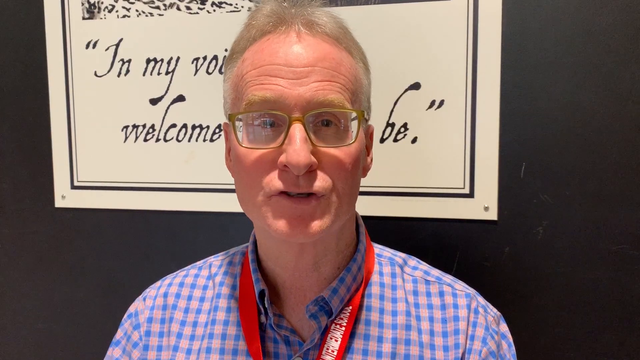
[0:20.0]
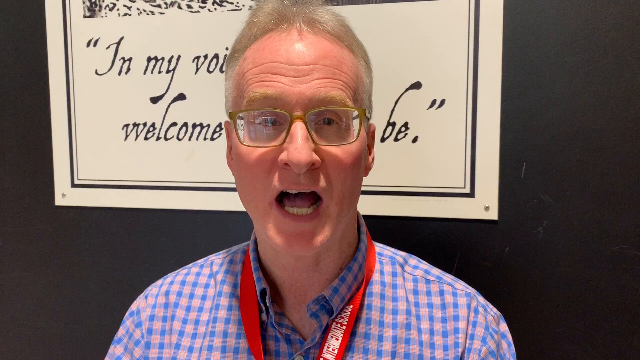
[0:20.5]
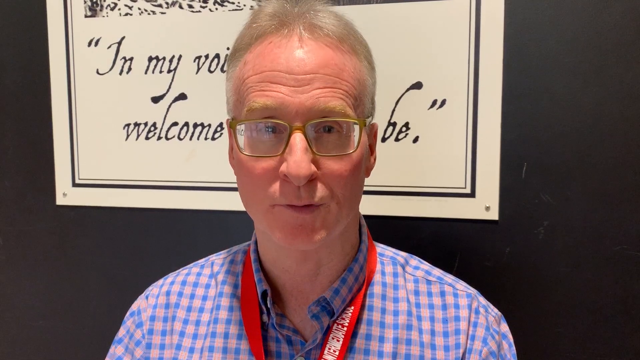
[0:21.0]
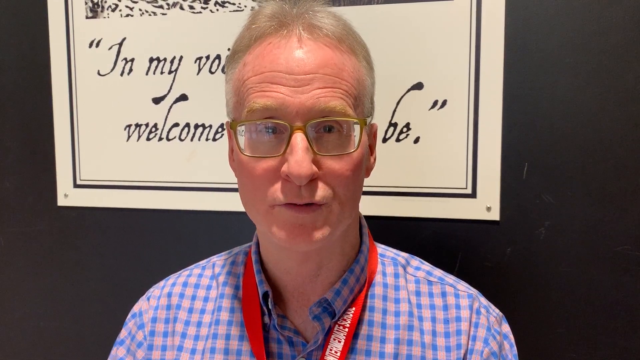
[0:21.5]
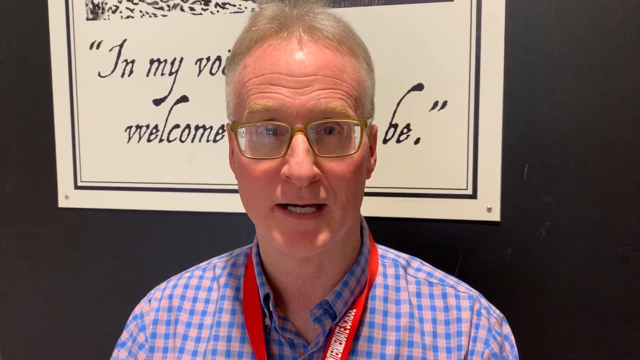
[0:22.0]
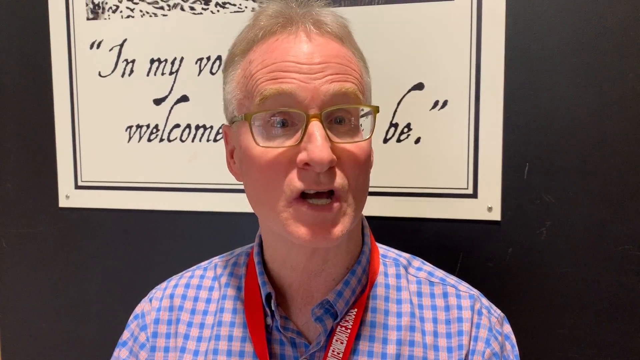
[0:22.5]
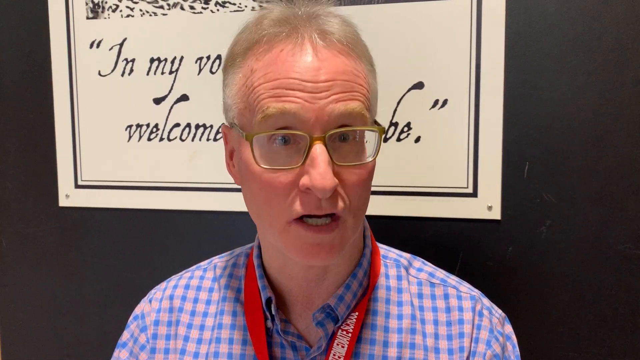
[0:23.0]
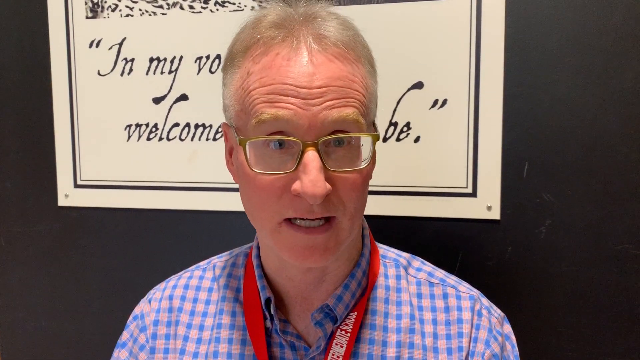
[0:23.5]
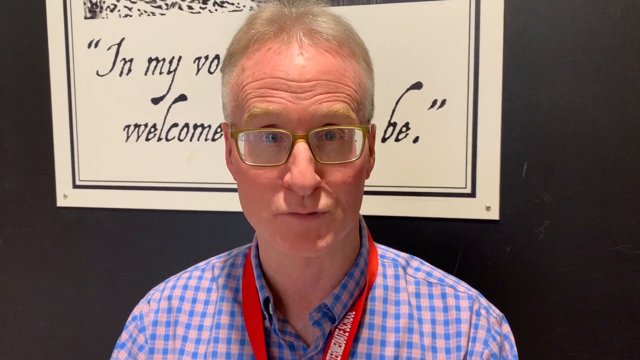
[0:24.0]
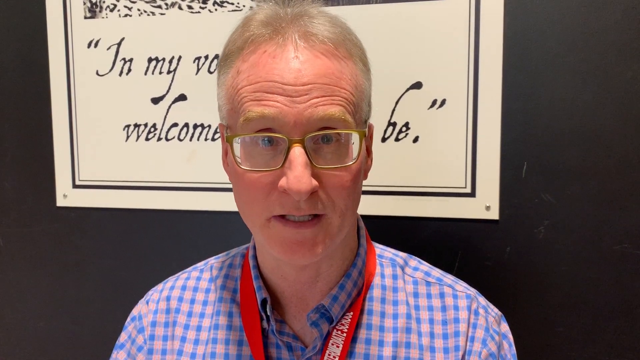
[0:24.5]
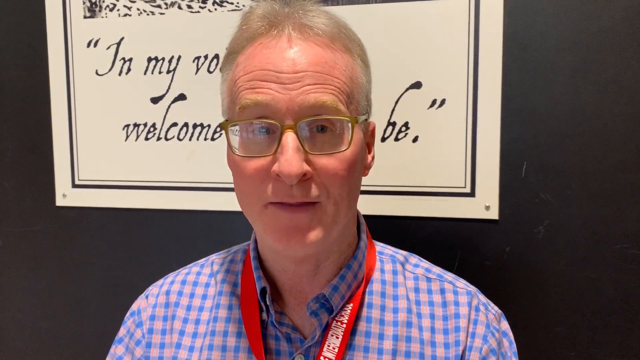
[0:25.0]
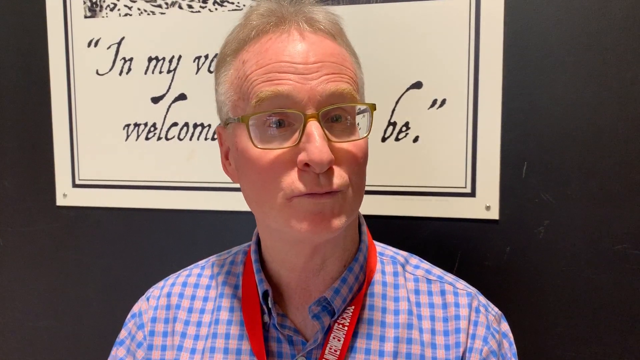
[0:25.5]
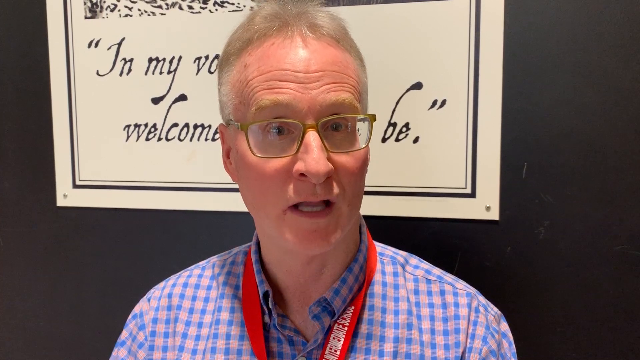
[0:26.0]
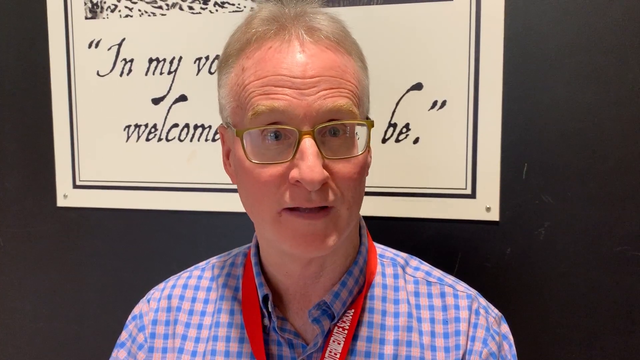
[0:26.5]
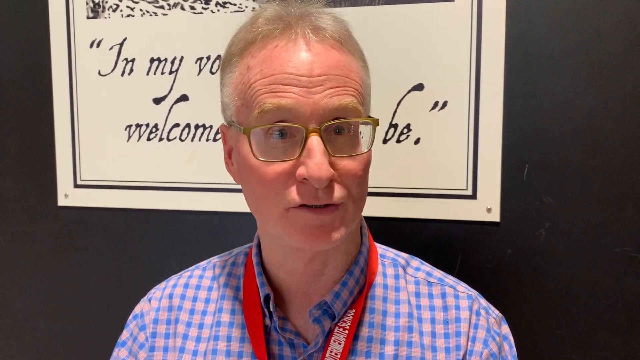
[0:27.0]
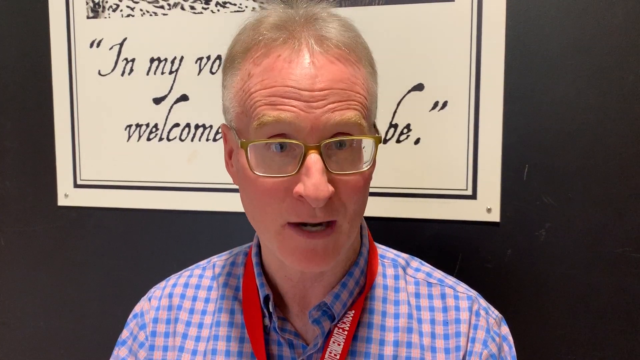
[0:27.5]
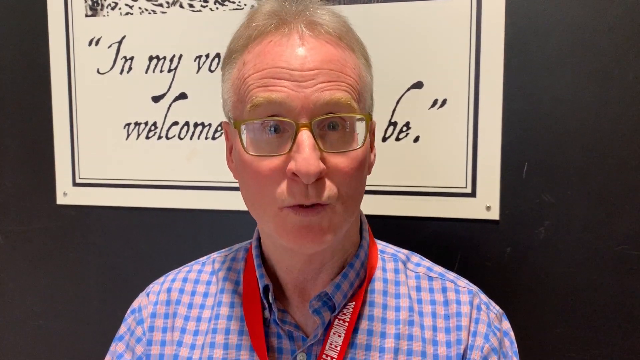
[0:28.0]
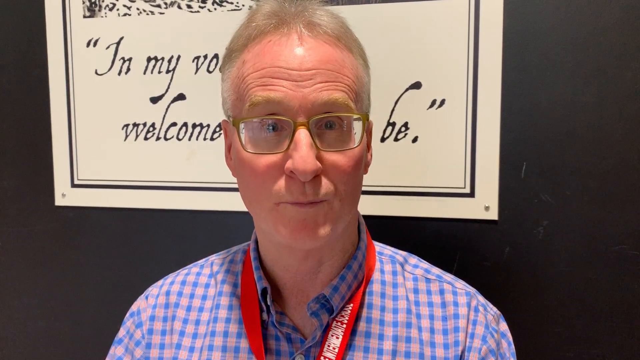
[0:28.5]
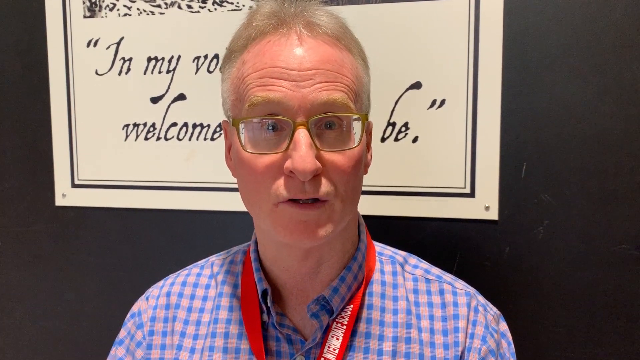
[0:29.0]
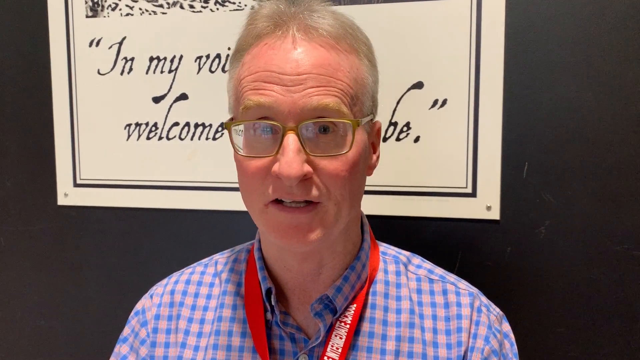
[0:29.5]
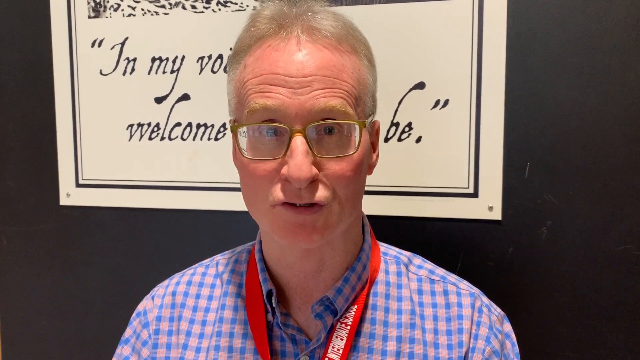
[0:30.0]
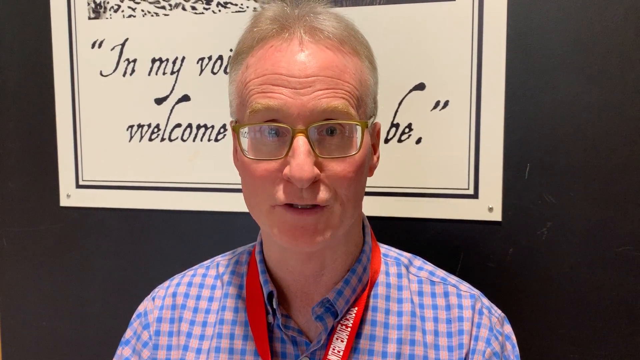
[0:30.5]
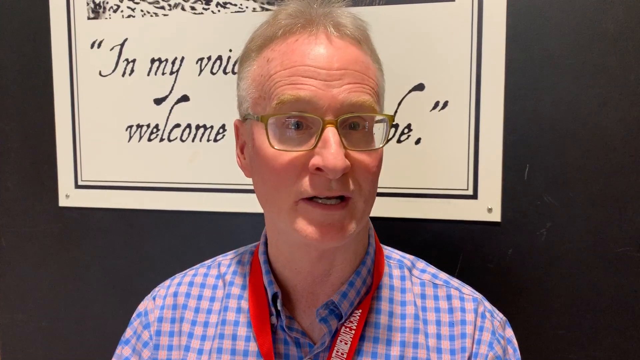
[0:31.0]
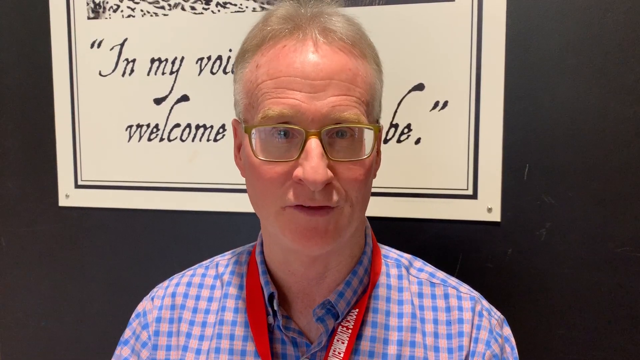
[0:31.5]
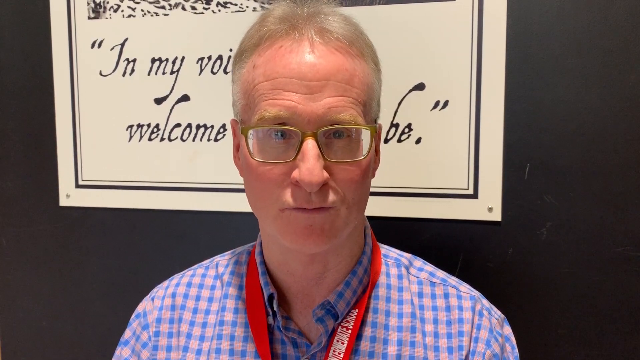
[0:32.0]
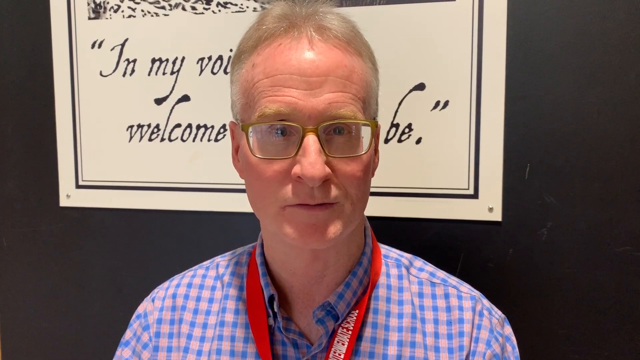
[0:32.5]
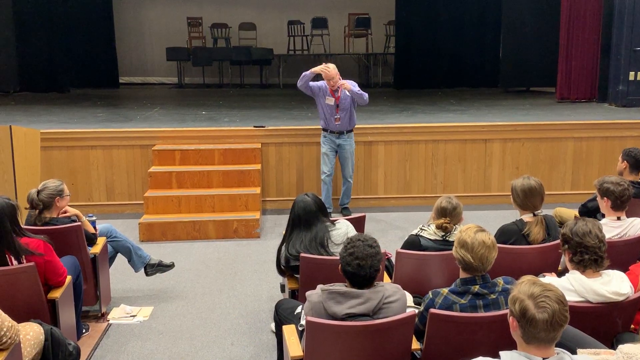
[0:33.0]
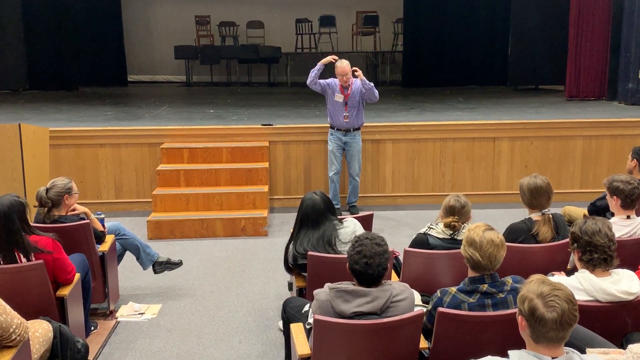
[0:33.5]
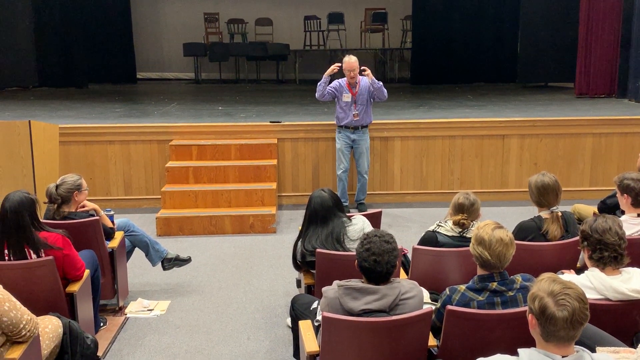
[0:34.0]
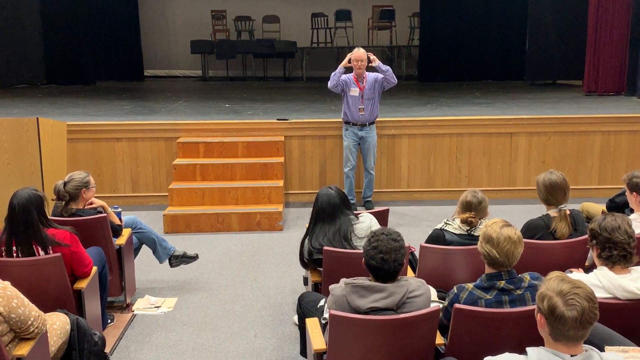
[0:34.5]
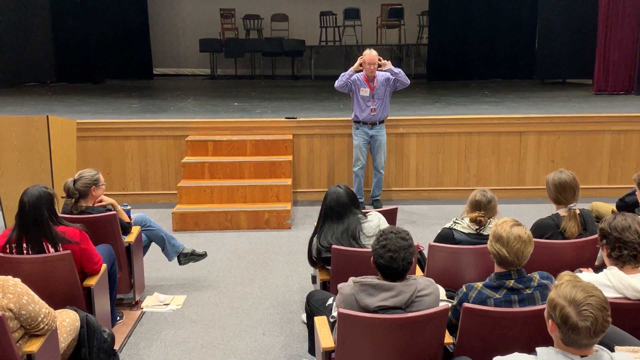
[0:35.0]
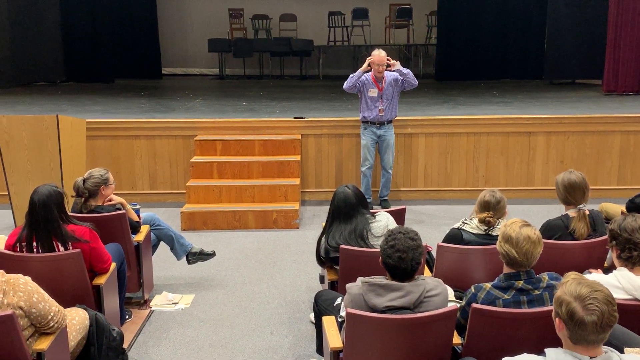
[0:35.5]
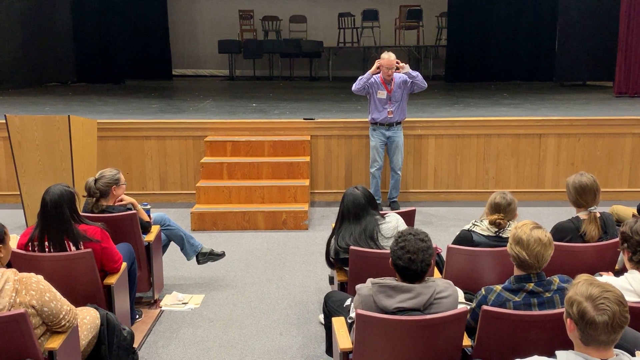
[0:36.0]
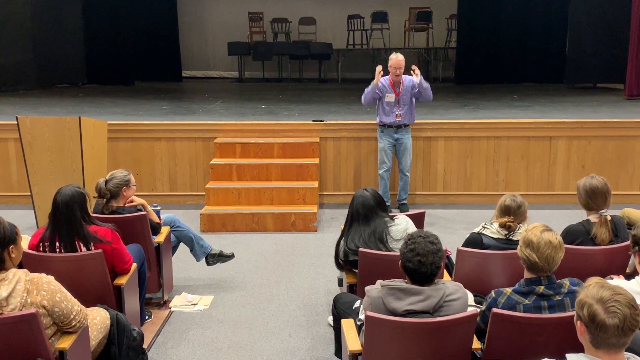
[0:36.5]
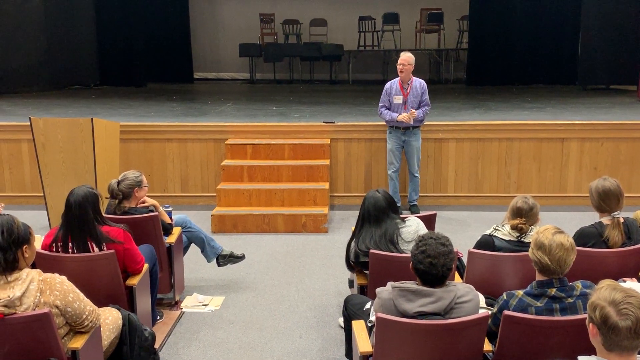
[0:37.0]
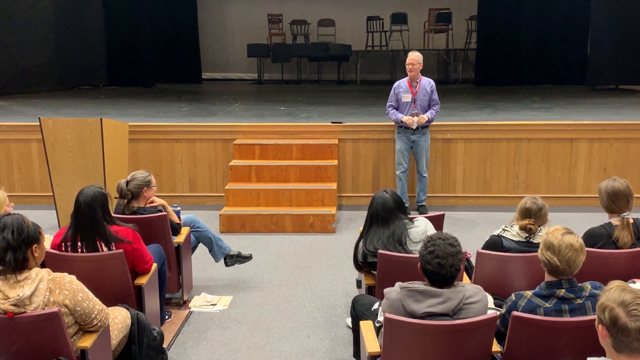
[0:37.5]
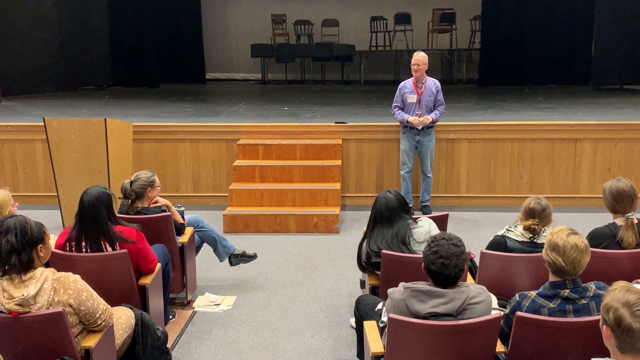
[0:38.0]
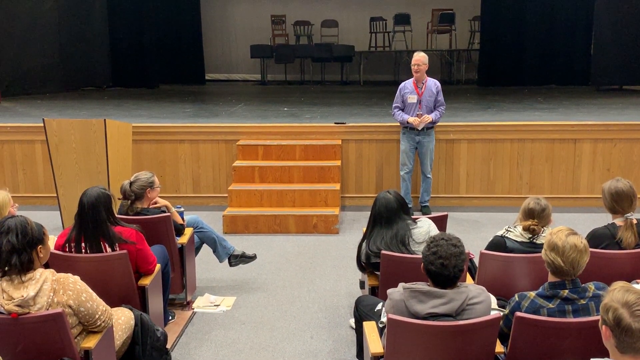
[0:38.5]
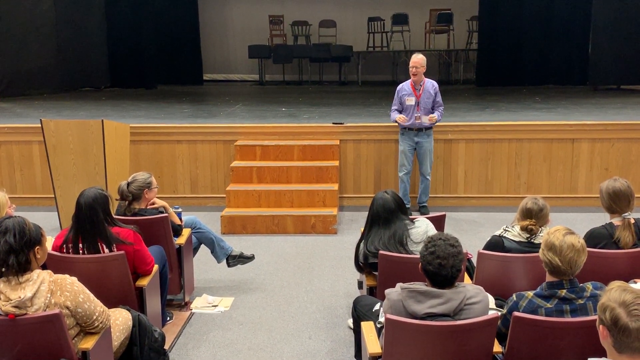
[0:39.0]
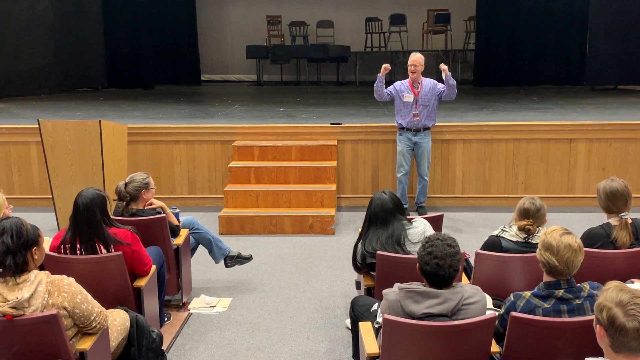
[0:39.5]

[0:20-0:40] The shot changes to a very close-up view of the man. Behind him is a picture that cannot quite be made out, with text that says "in my voice welcome", something else, and then the word "be". The poster is off-white with black font, on a black wall. He is talking, wears rectangular glasses, and shakes his head a little. The video then cuts back to him in the lecture hall, talking with his hands held up high; nobody in the audience is on a phone.